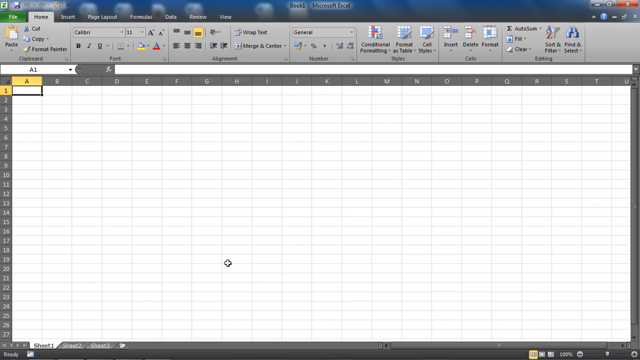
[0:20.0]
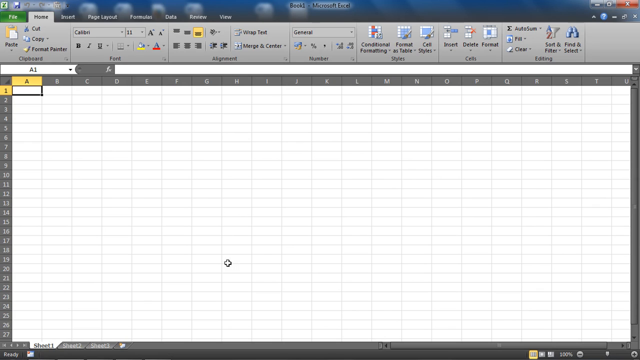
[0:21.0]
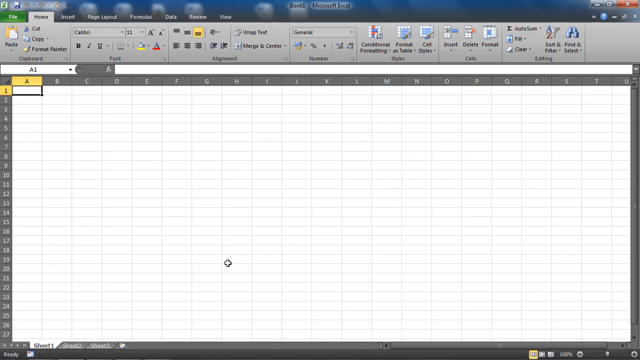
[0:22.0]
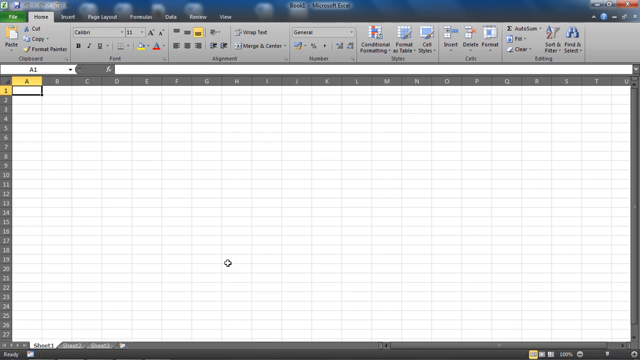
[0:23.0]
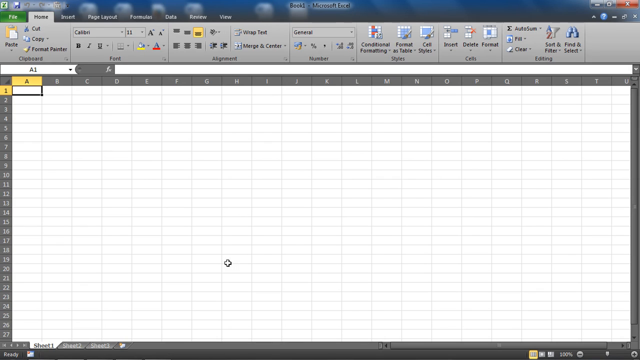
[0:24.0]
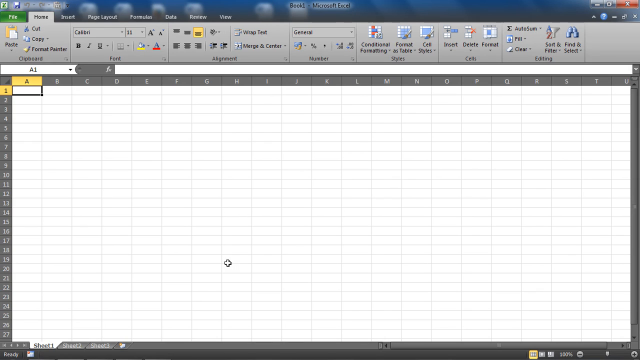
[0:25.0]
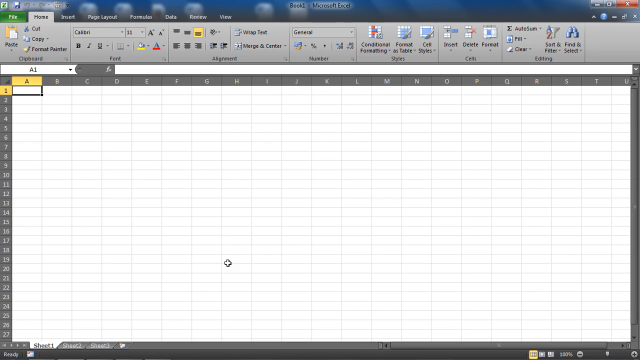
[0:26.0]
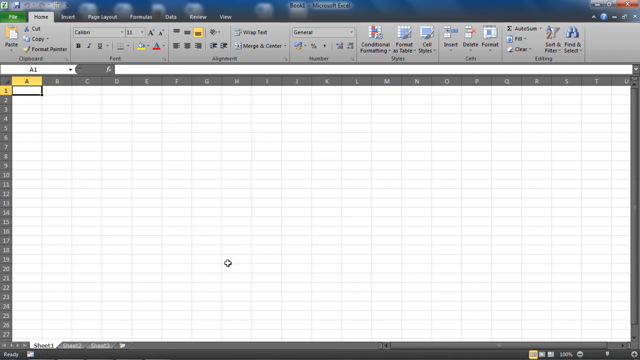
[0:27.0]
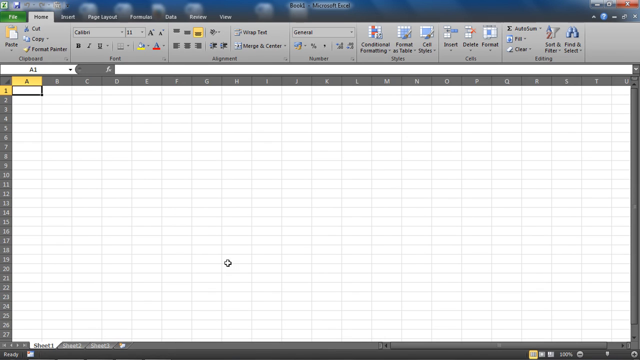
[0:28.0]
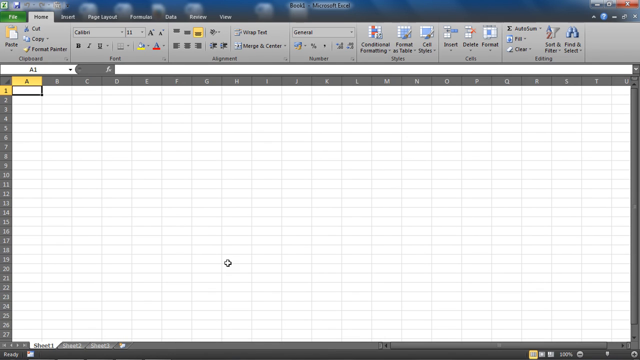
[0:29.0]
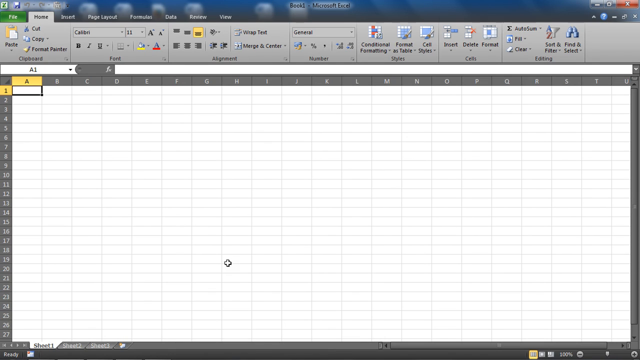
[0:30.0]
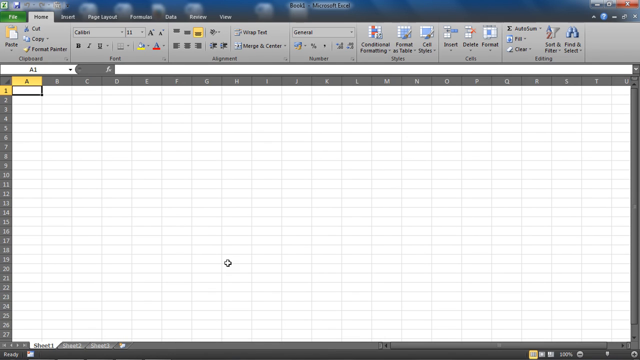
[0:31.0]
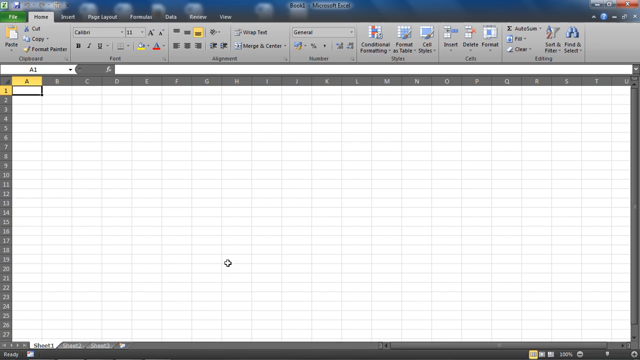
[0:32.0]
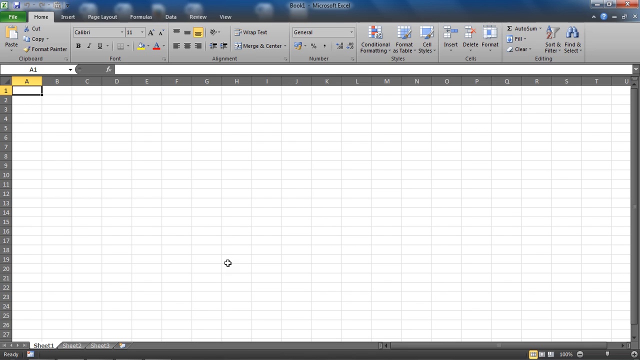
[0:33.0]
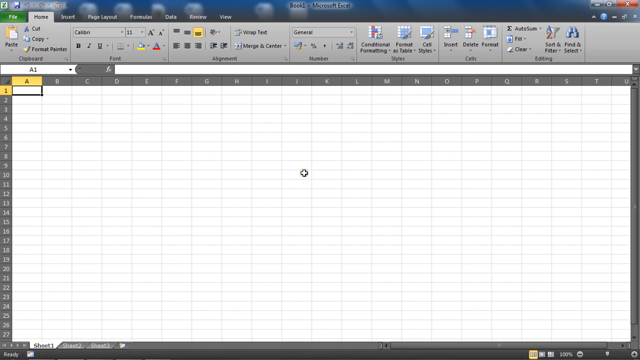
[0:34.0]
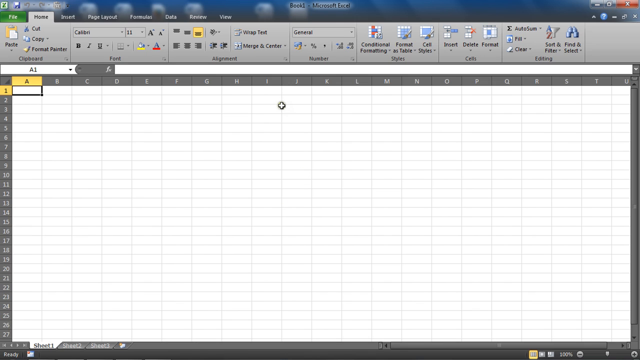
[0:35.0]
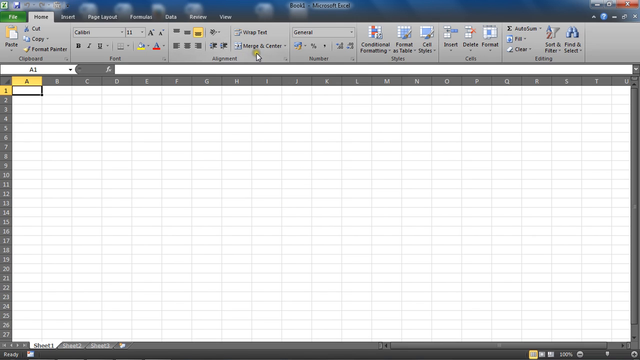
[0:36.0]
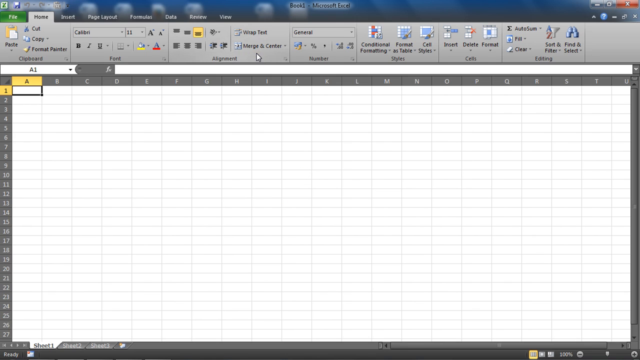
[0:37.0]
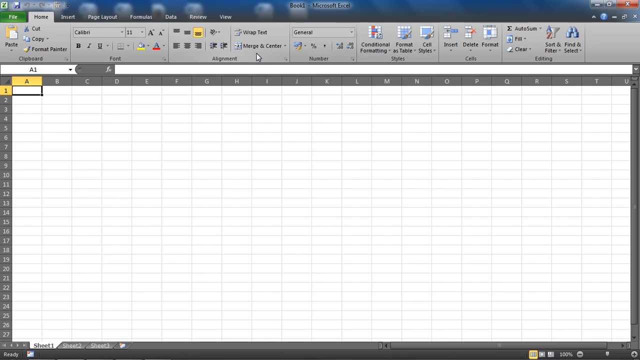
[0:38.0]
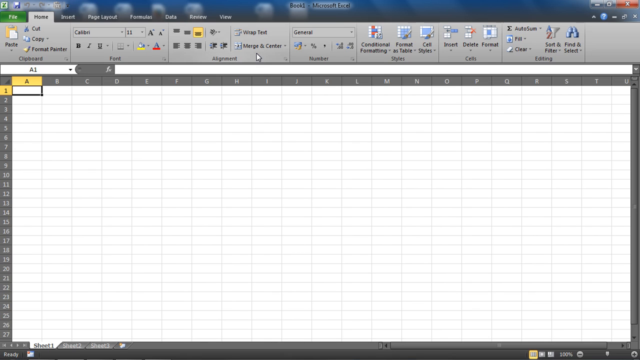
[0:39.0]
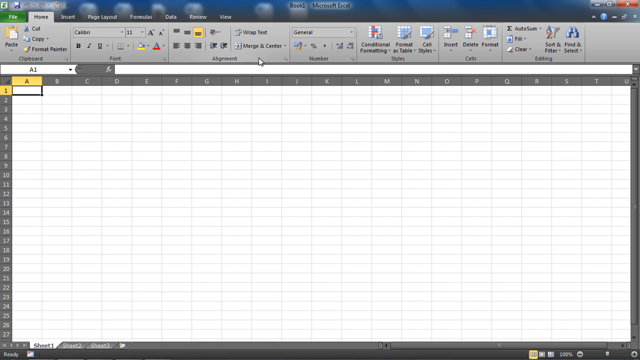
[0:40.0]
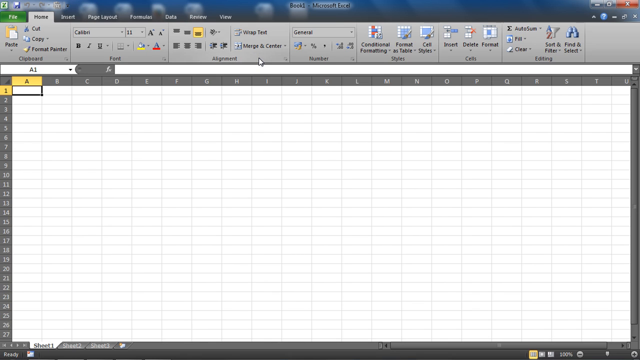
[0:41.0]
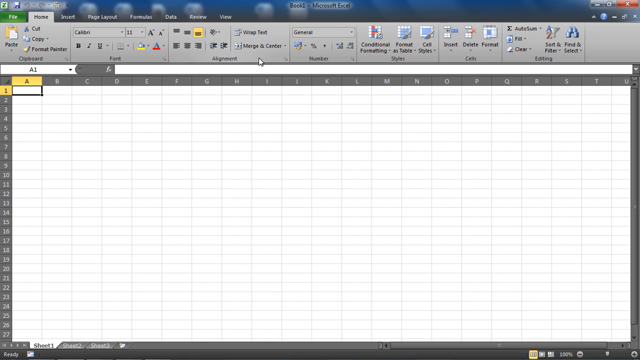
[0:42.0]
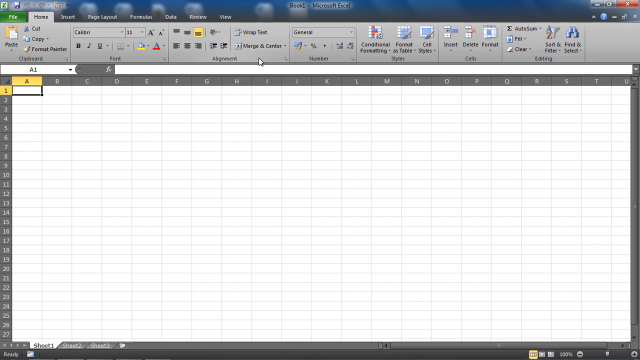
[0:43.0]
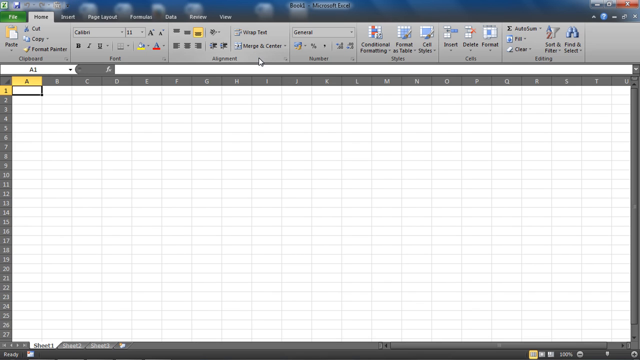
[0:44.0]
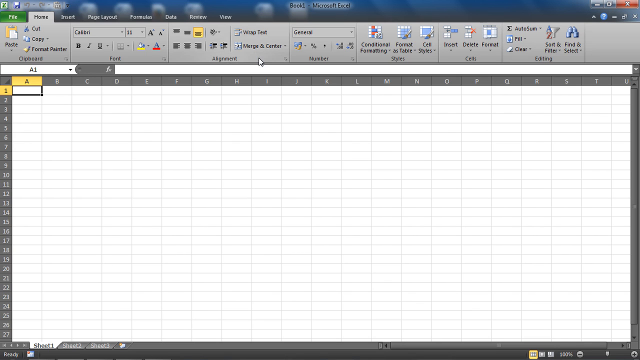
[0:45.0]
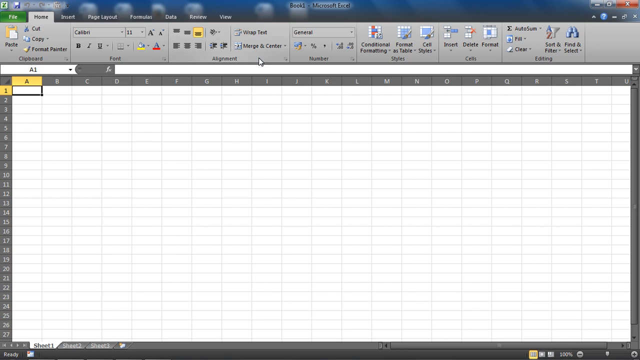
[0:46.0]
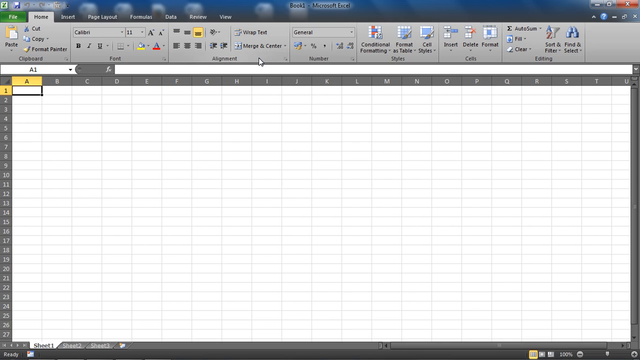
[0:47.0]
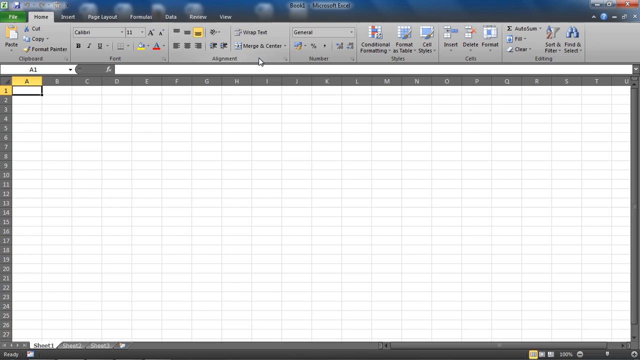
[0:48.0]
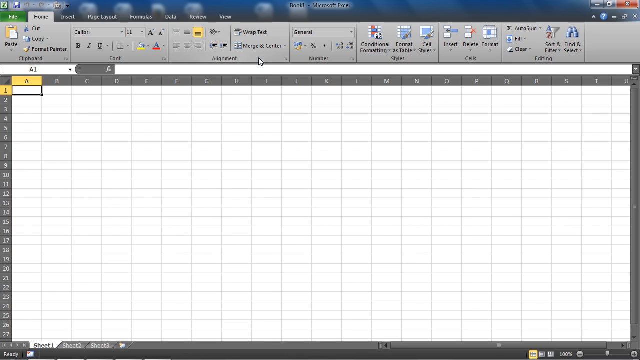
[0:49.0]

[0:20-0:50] The same empty Excel screen remains with no action. The cells are more landscape than portrait, which is sort of the default. The cross cursor then starts to move and heads up toward the top. As soon as it leaves the Excel cells it stops being a cross and becomes a white arrow when it reaches the toolbar. It stops just below Merge & Center, on top of Alignment, and rests there, sort of a little to the right of the Alignment label against some empty gray space. It does not seem to do anything at first; apparently nothing has been clicked yet, though it almost looks like a click, since a small pressing graphic appears. For a brief fraction of a second, what looks like a white window with a bunch of words in it opens up.